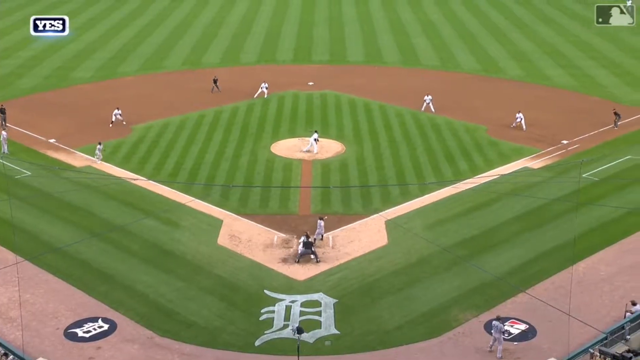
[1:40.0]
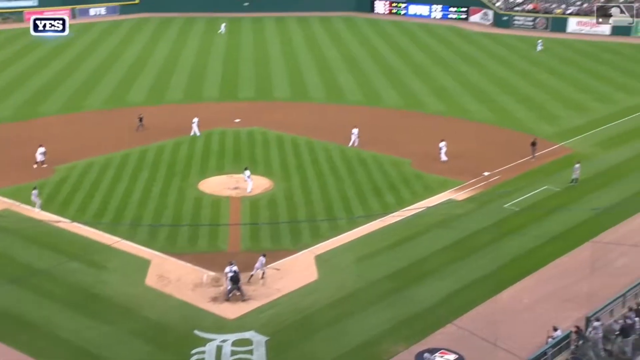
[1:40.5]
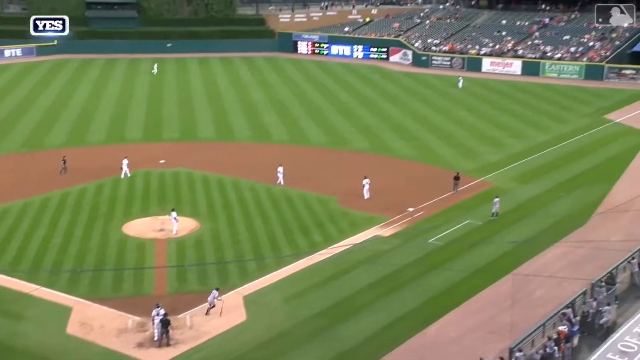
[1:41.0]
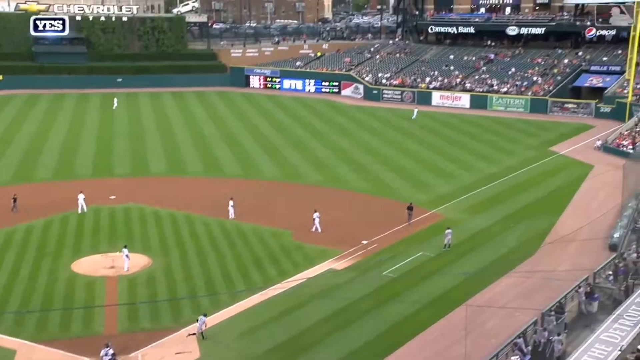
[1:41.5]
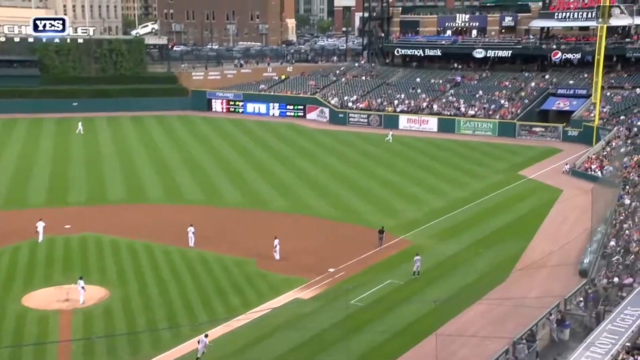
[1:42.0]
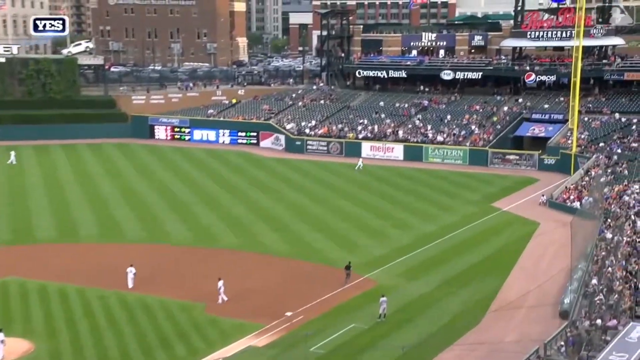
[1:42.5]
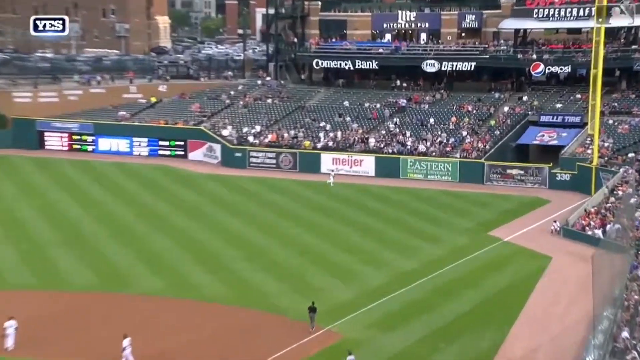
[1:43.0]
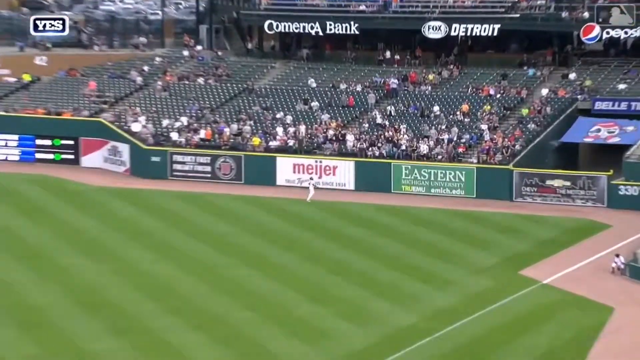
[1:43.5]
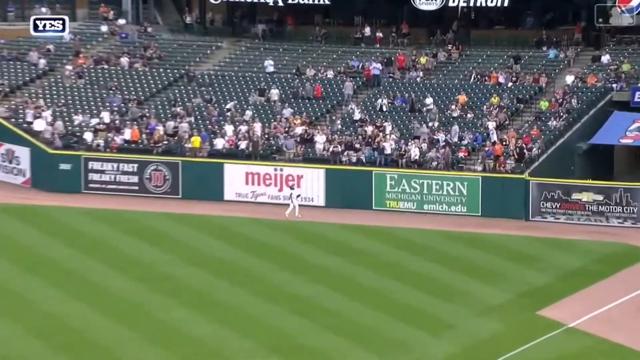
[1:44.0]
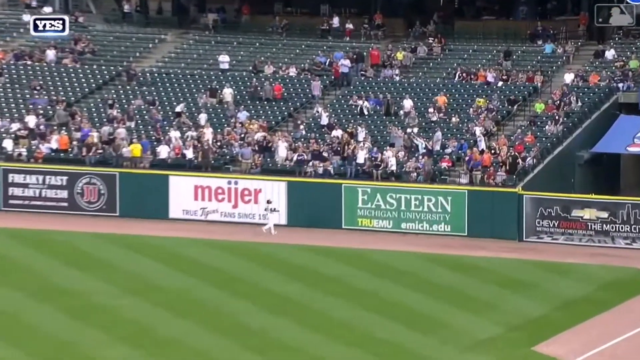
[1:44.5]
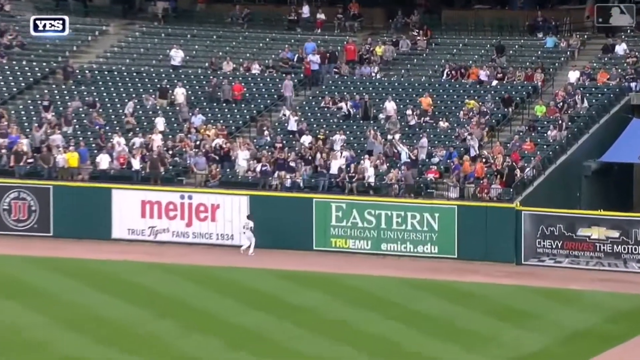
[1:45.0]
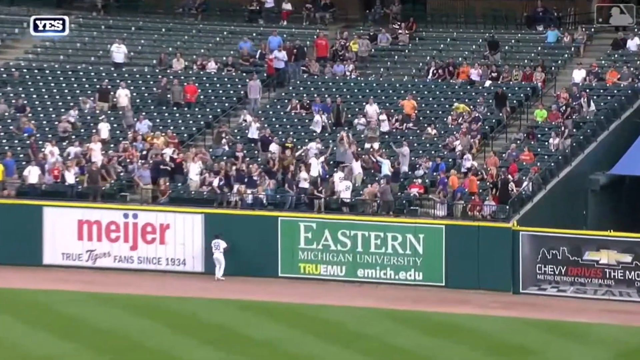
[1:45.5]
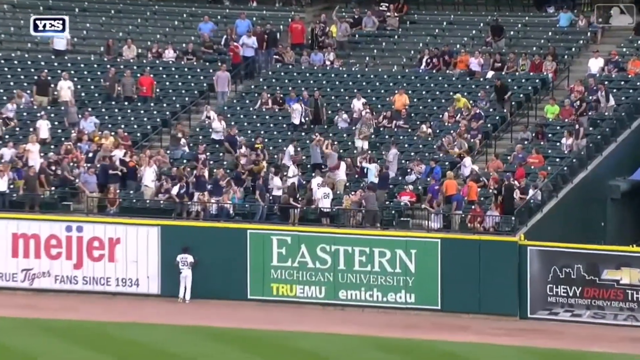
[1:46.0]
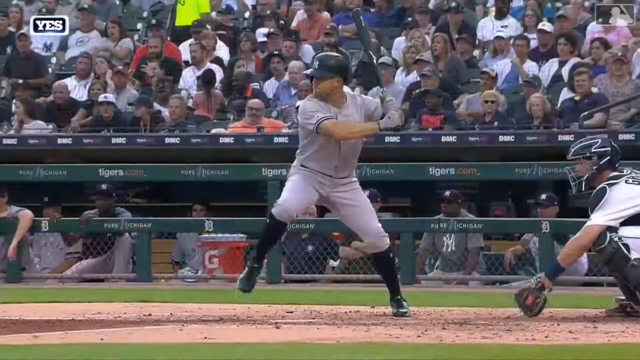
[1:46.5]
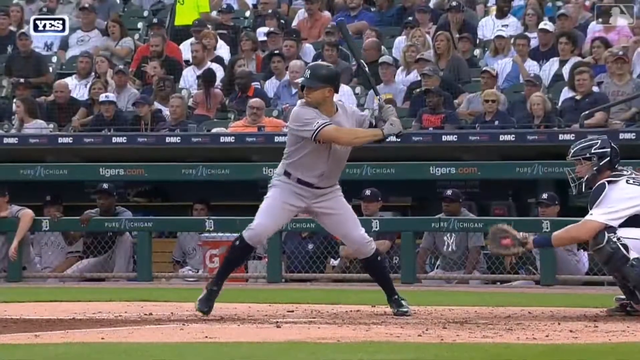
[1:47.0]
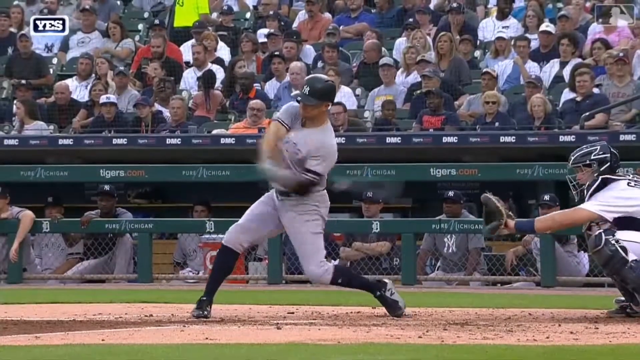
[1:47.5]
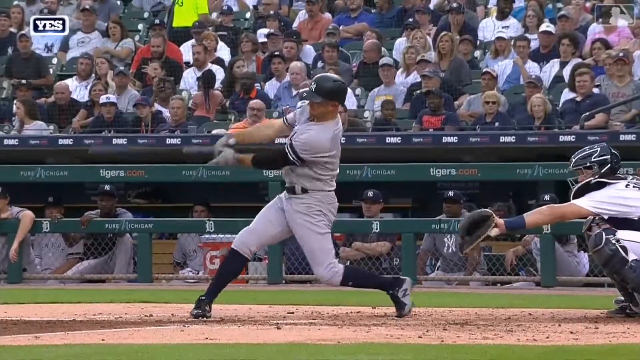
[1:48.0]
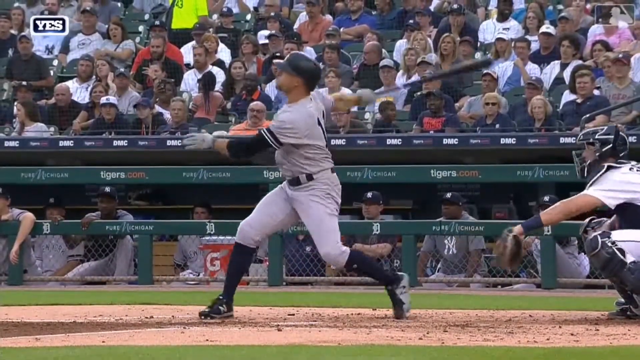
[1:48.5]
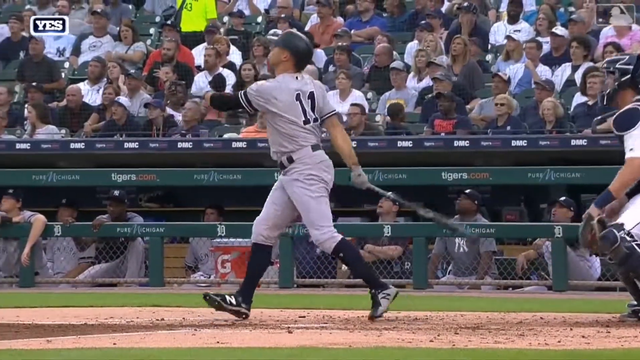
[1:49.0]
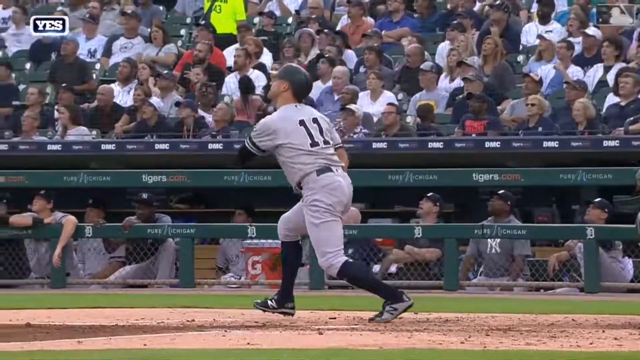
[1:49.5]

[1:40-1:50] An overhead view shows the play and the ball heading for the home run. The player who hit it is no longer in view, and the camera slowly follows the ball. Nine players are visible on the field, along with the umpire. The ball travels from left to right across the field, and a player following it seems to be looking up. A slow-motion view then shows the ball being hit for a home run.